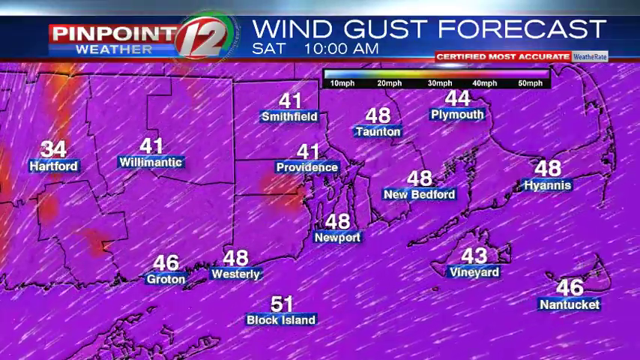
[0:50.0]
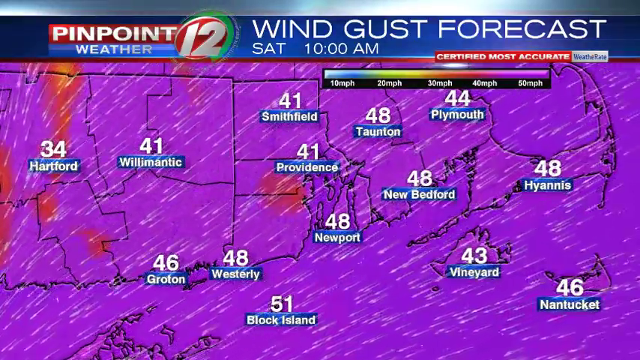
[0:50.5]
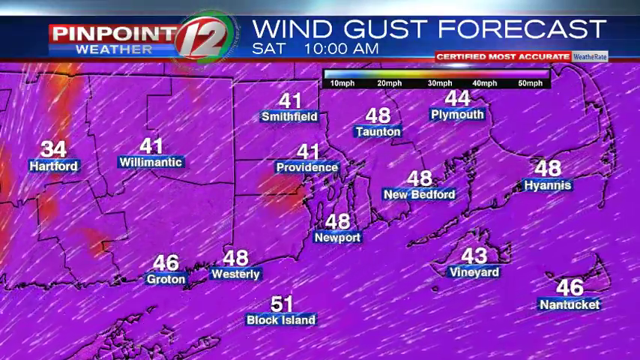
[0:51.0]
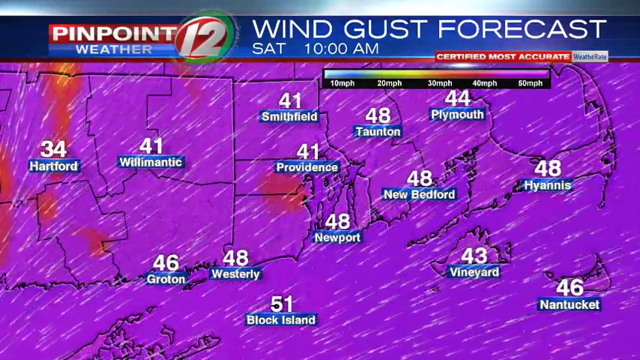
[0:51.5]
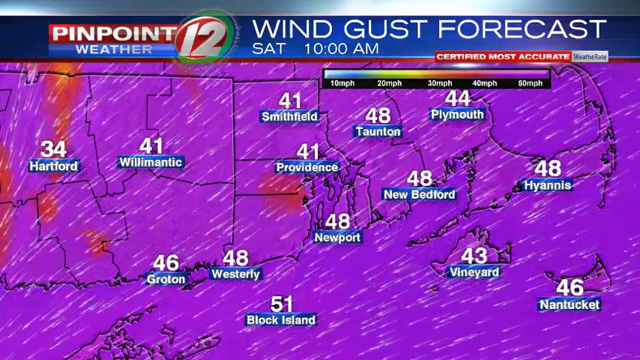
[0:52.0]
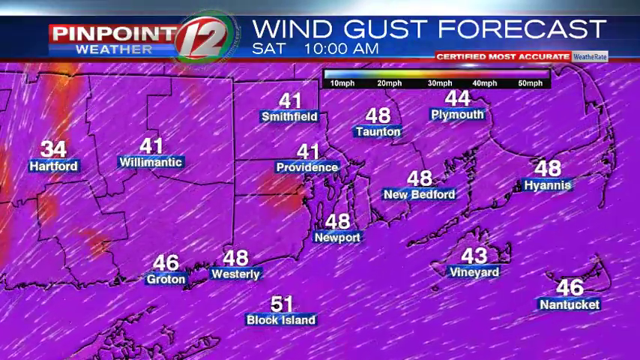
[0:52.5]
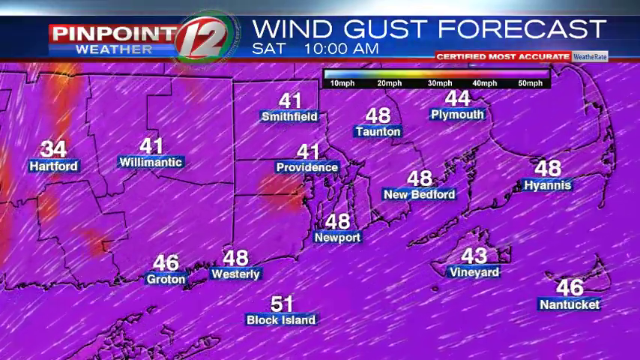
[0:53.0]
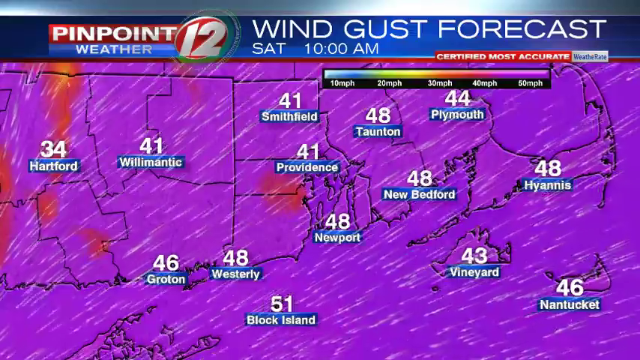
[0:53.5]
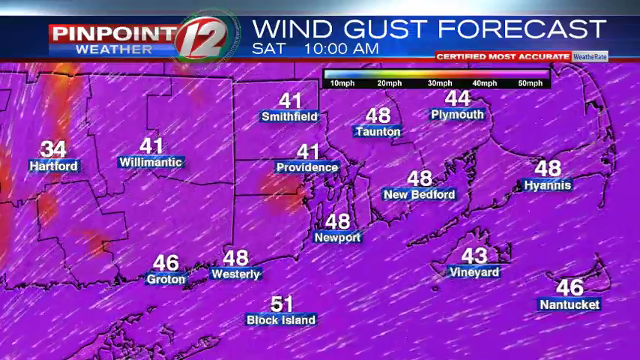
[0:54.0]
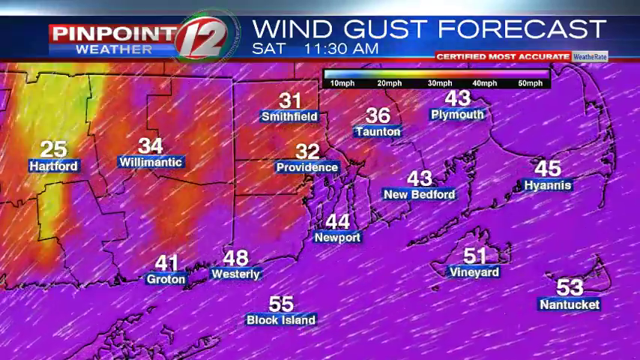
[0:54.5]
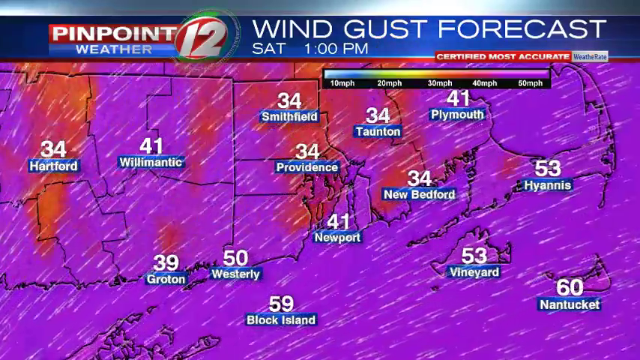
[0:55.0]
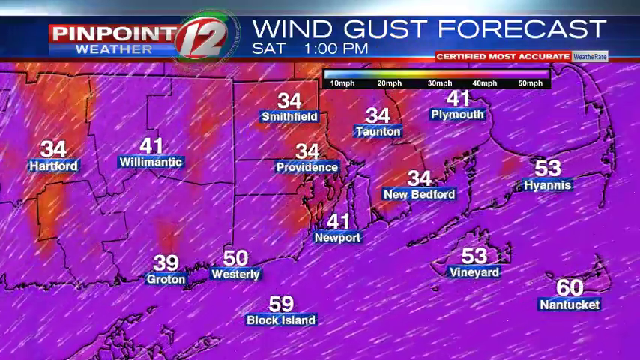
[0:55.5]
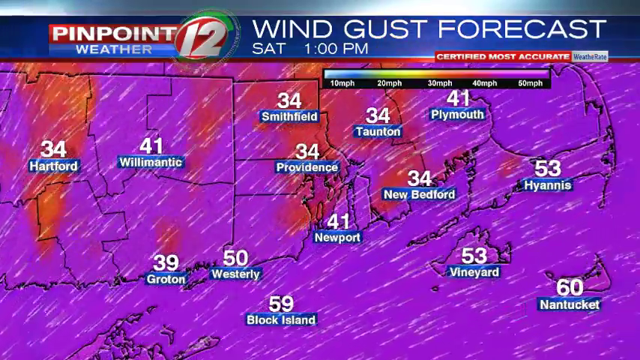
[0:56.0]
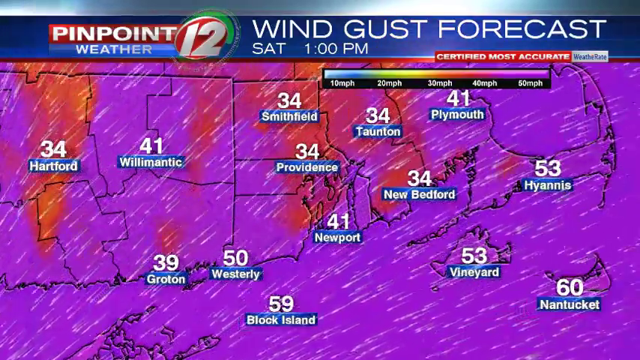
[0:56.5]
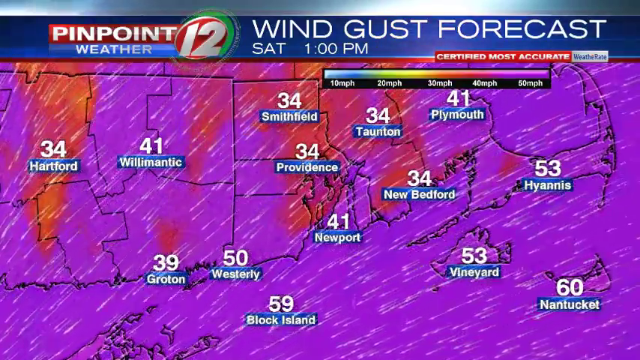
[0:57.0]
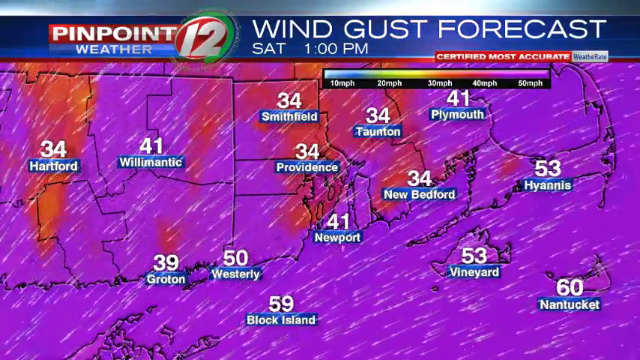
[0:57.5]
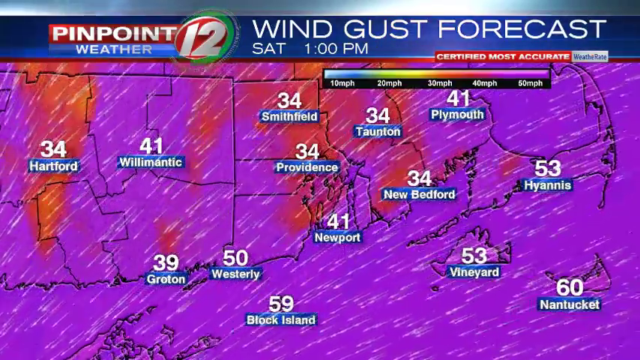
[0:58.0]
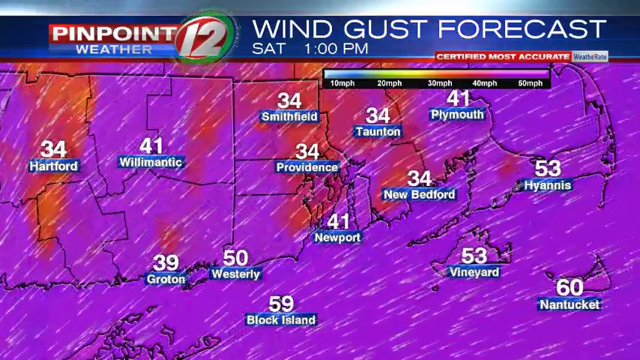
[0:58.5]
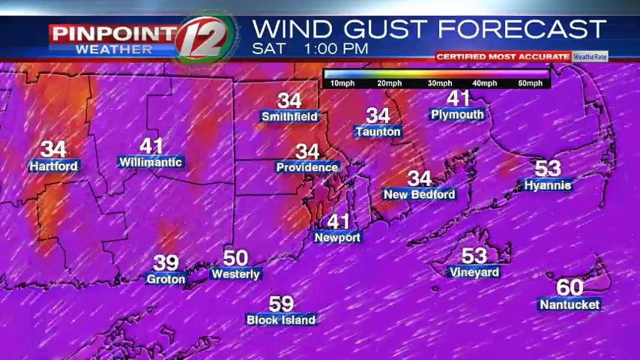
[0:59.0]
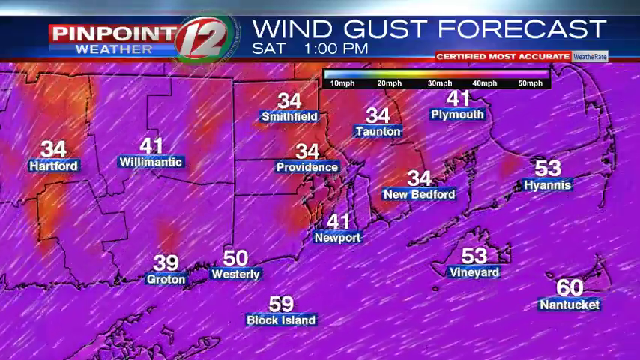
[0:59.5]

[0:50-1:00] A map shows the southern part of New England: most of Massachusetts and the Cape, Martha's Vineyard and Nantucket, and Block Island along with Rhode Island and Connecticut. Across the top it reads "pinpoint weather 12, wind gust forecast Saturday 10 AM." The map is covered in purple with some orange spots, the colors indicating the top speed of the wind gusts. White streaks travel right to left across the screen, indicating the wind direction. Numerous towns throughout the region are highlighted and named, each with a number above it. The top text then changes to "Saturday 1 PM" and moves on.